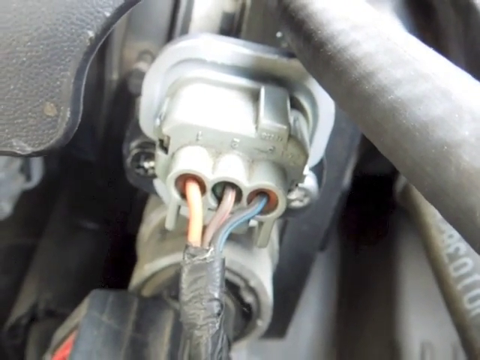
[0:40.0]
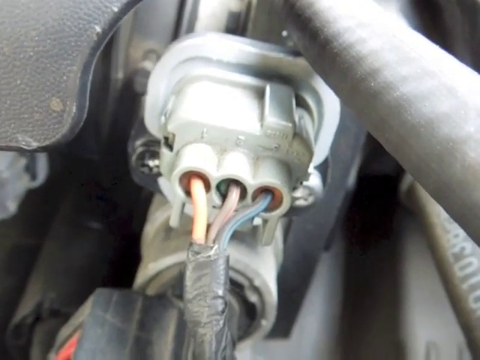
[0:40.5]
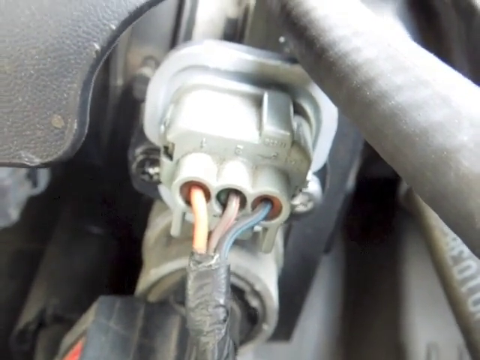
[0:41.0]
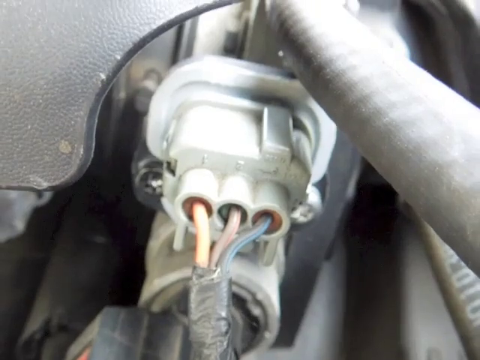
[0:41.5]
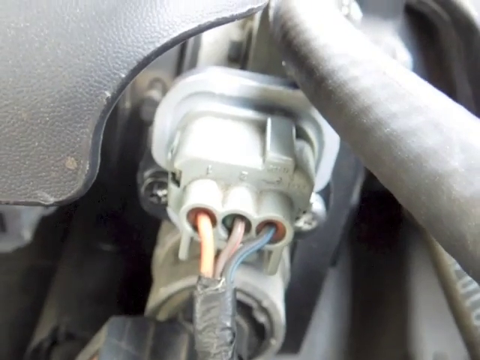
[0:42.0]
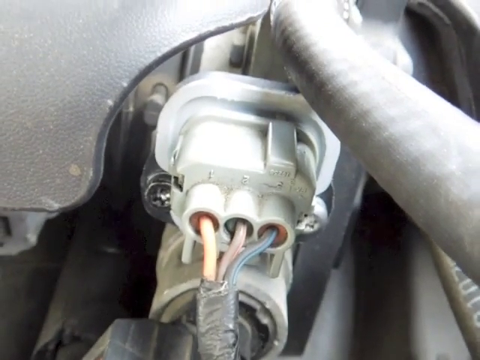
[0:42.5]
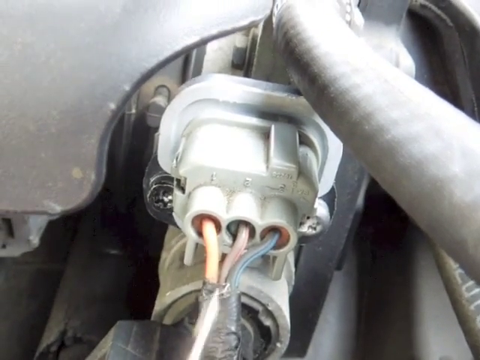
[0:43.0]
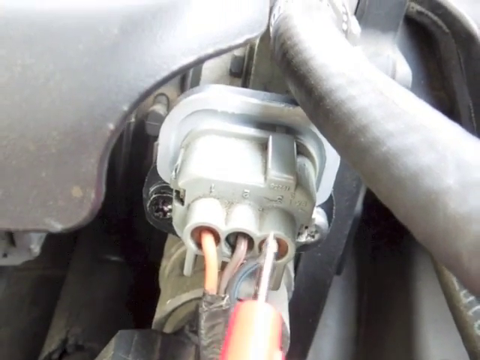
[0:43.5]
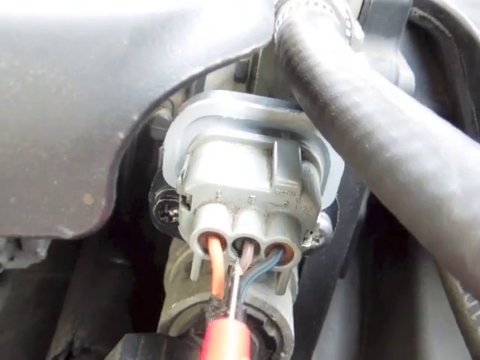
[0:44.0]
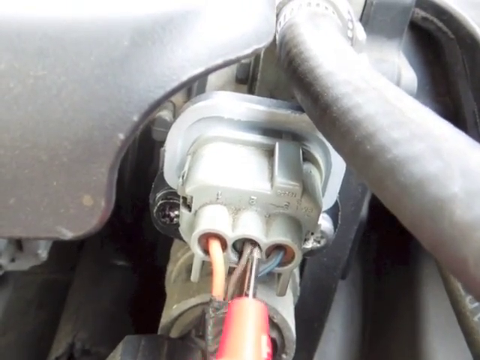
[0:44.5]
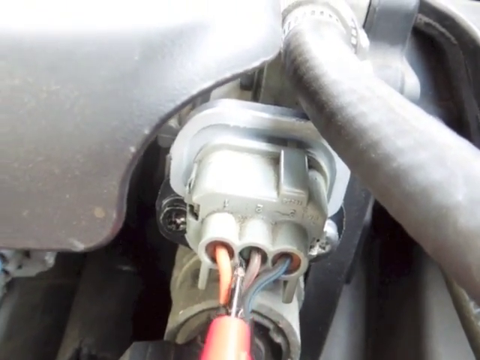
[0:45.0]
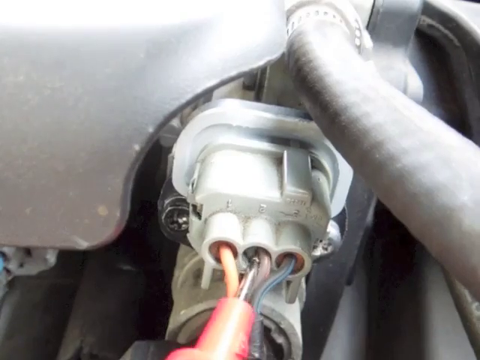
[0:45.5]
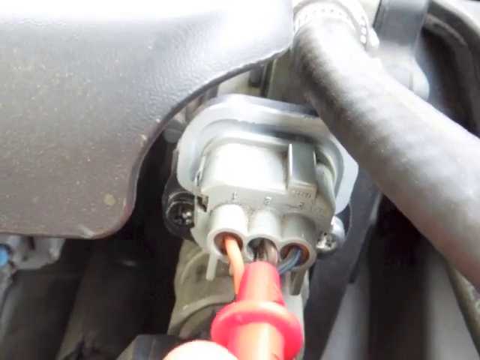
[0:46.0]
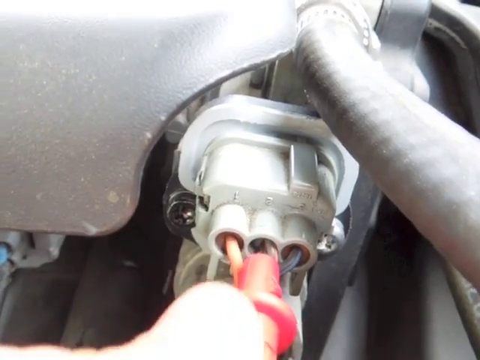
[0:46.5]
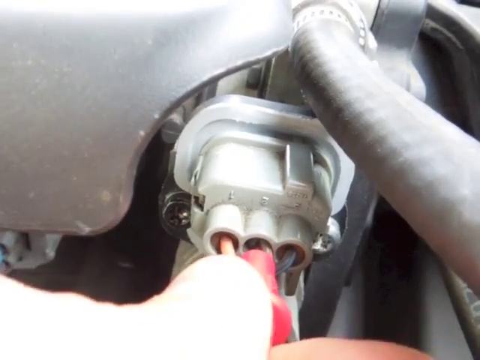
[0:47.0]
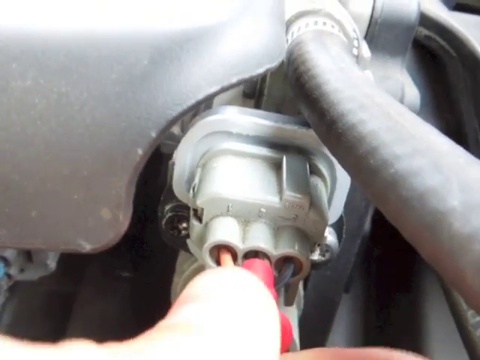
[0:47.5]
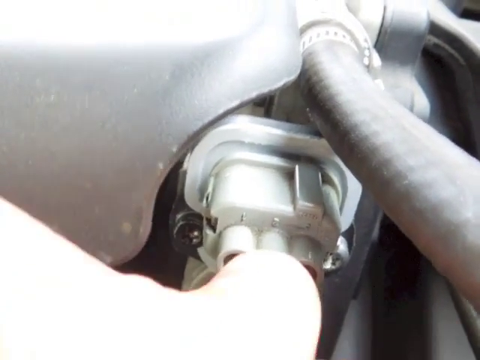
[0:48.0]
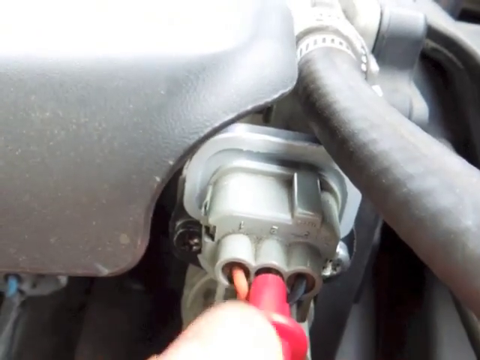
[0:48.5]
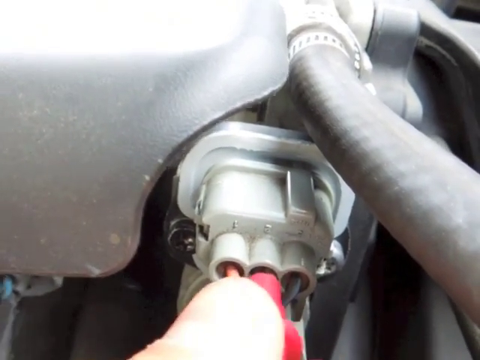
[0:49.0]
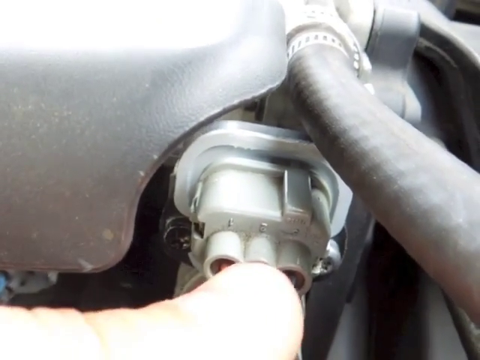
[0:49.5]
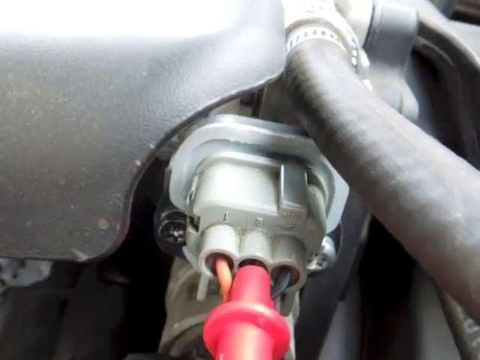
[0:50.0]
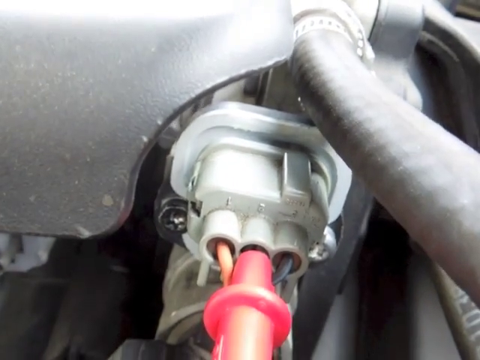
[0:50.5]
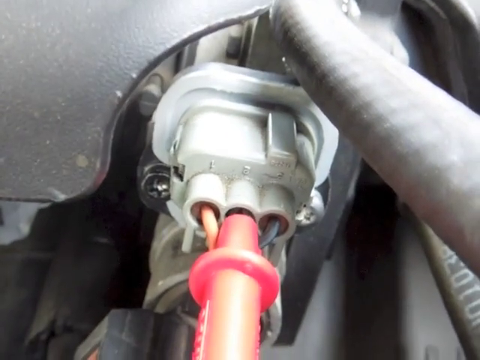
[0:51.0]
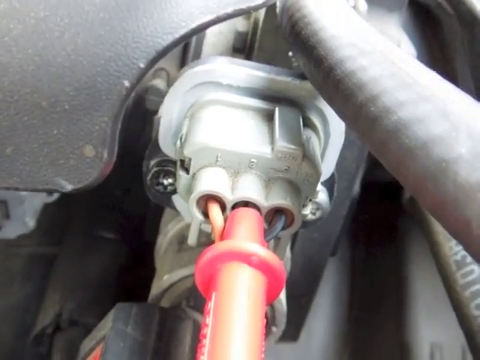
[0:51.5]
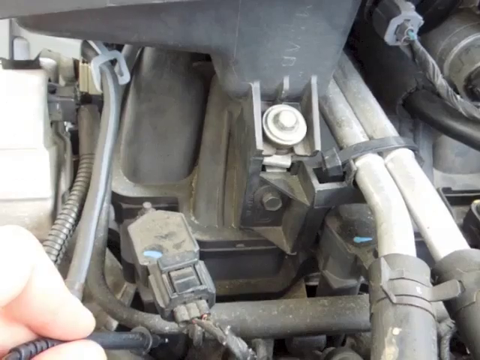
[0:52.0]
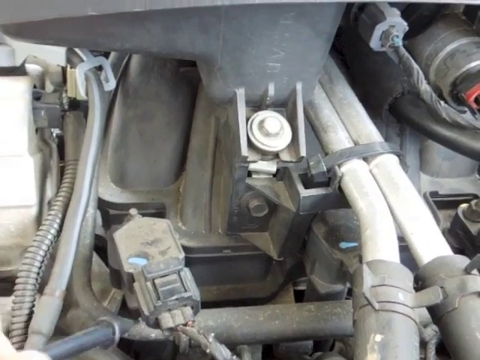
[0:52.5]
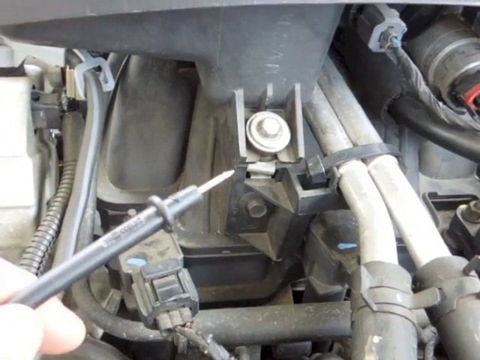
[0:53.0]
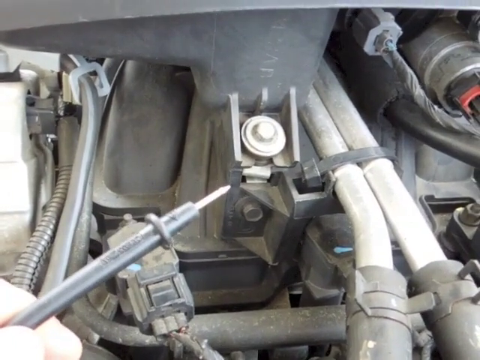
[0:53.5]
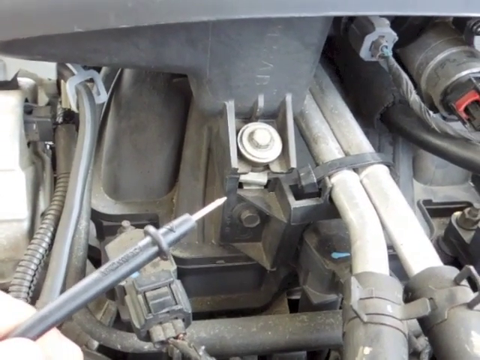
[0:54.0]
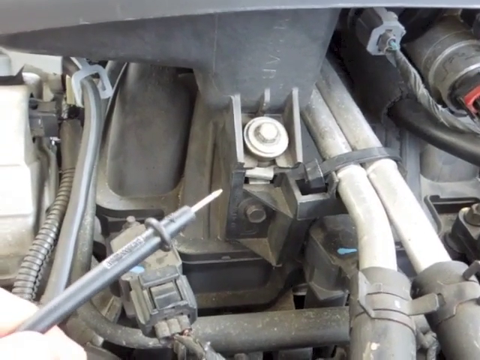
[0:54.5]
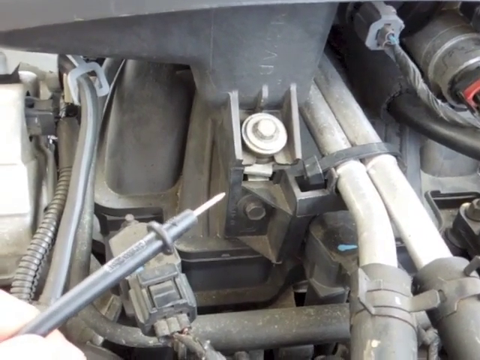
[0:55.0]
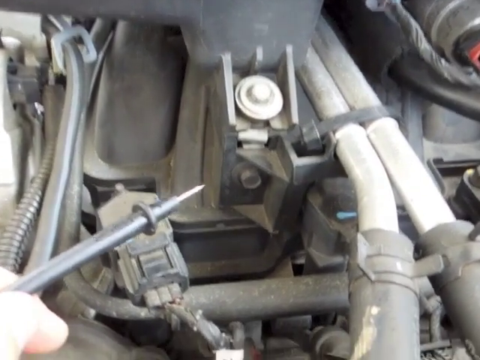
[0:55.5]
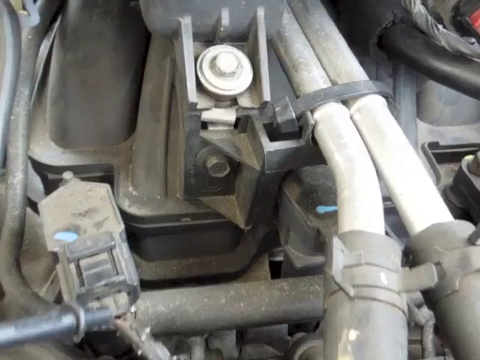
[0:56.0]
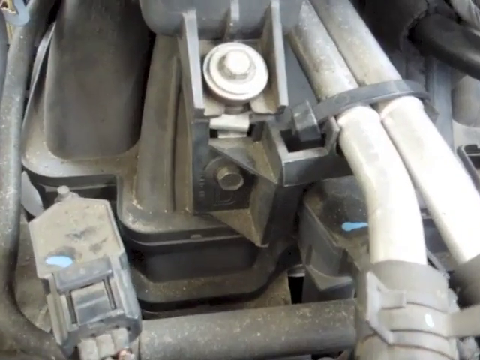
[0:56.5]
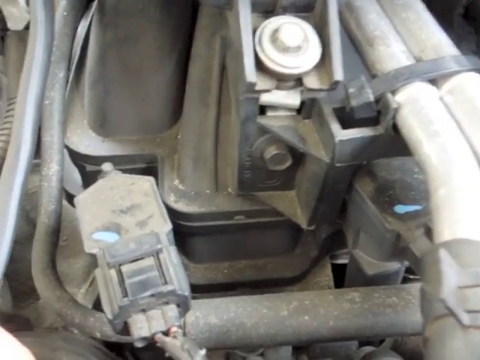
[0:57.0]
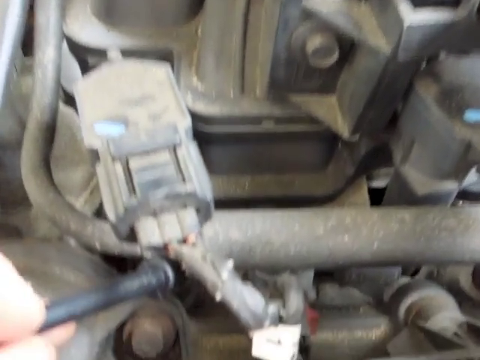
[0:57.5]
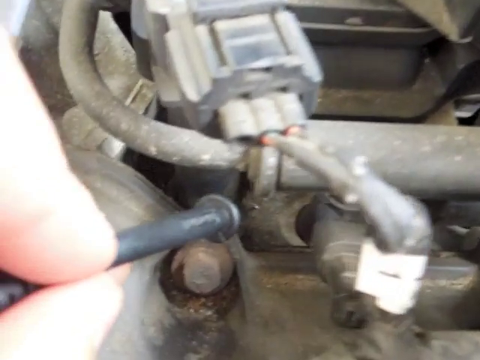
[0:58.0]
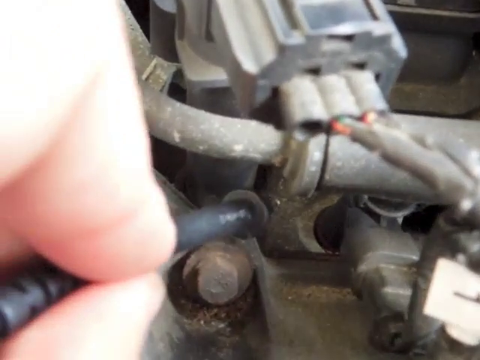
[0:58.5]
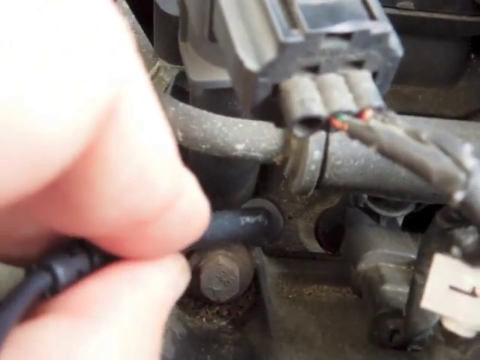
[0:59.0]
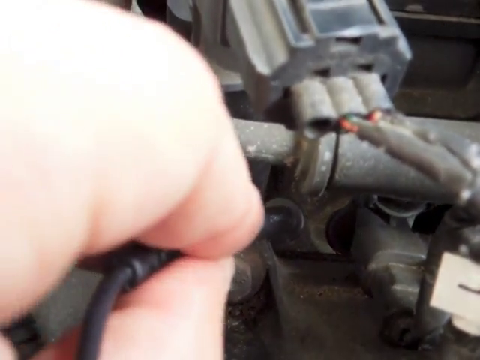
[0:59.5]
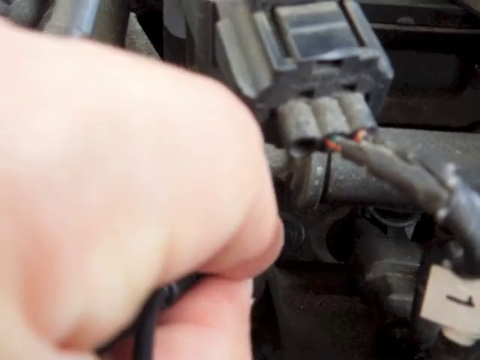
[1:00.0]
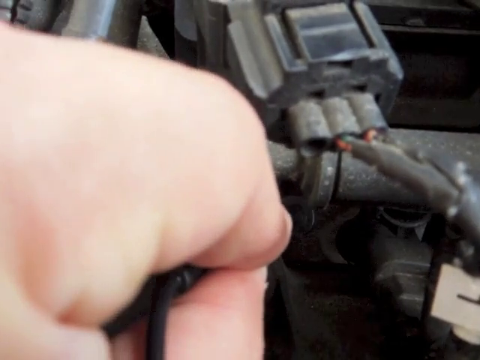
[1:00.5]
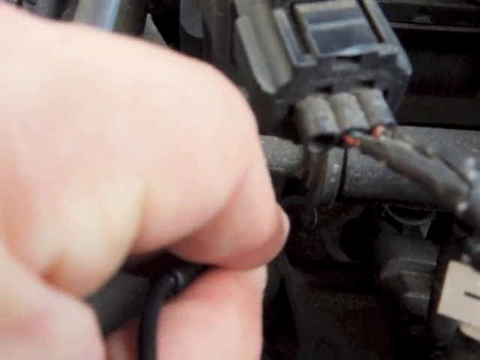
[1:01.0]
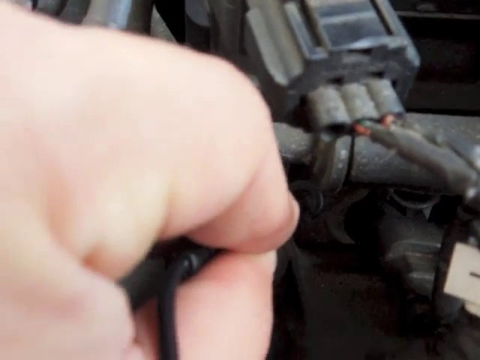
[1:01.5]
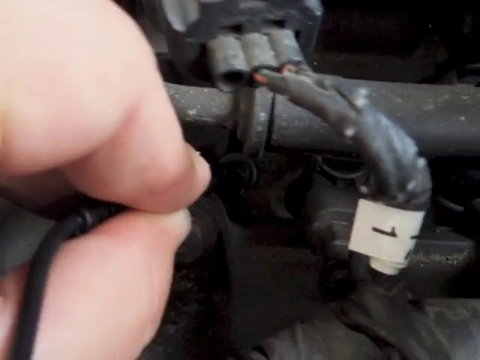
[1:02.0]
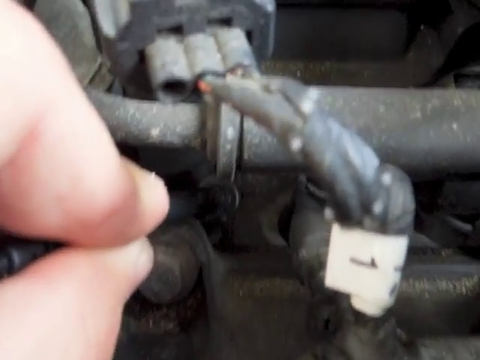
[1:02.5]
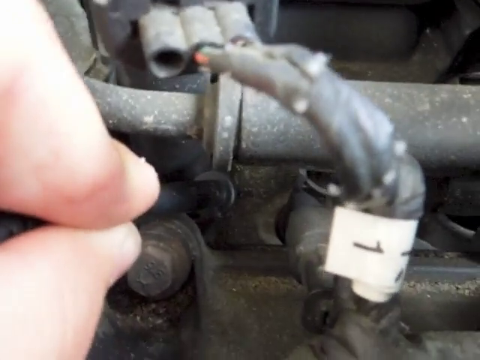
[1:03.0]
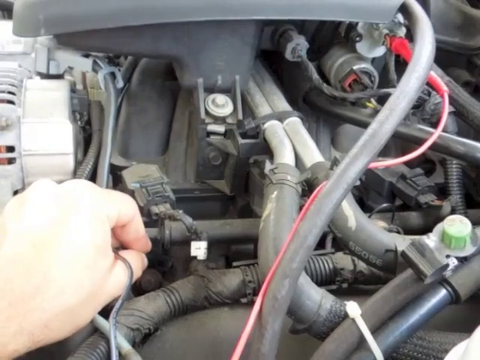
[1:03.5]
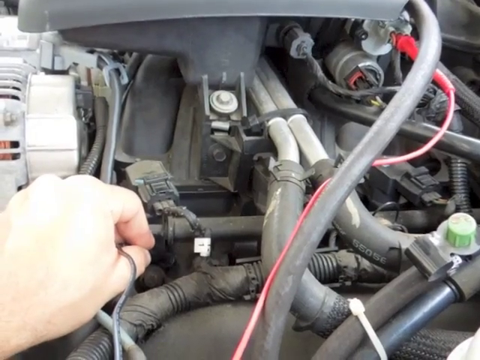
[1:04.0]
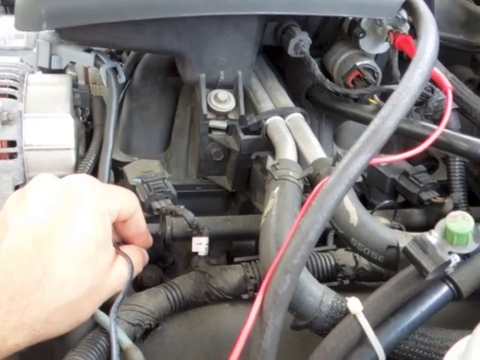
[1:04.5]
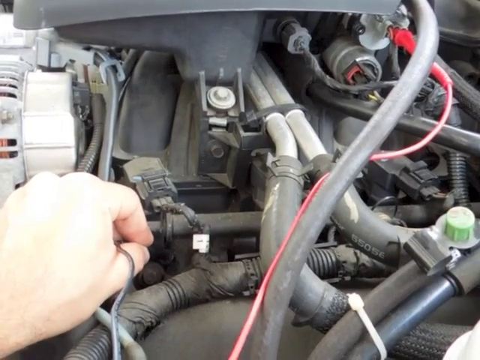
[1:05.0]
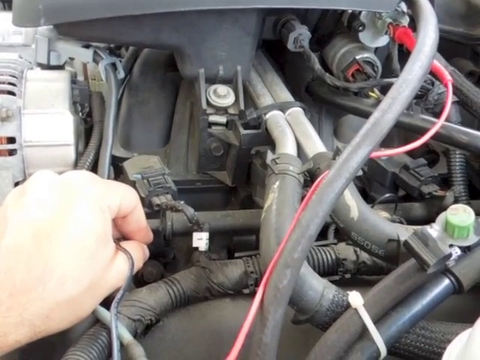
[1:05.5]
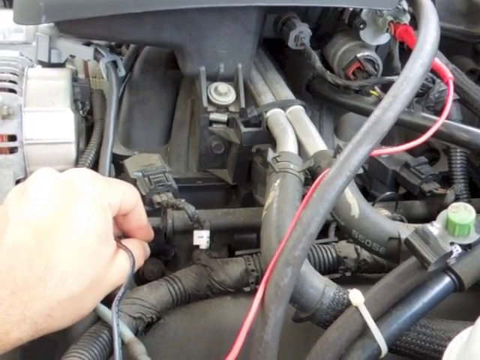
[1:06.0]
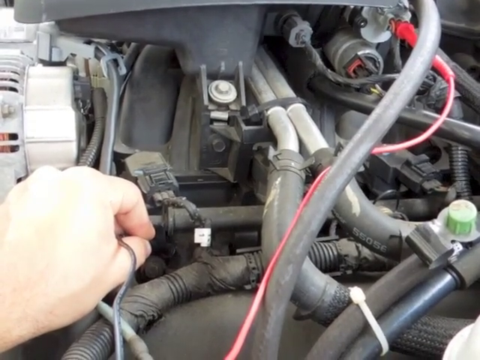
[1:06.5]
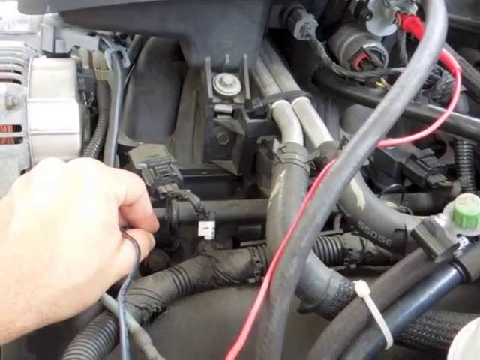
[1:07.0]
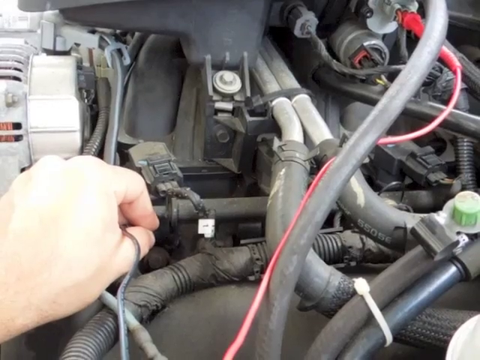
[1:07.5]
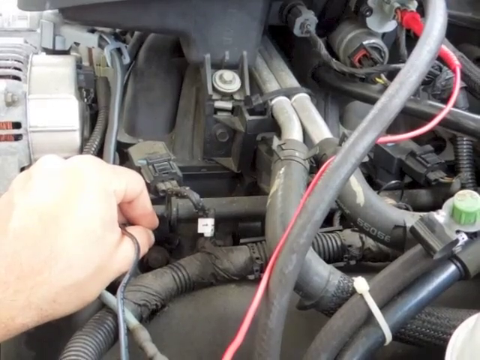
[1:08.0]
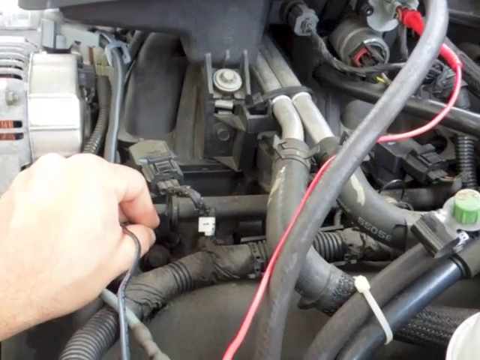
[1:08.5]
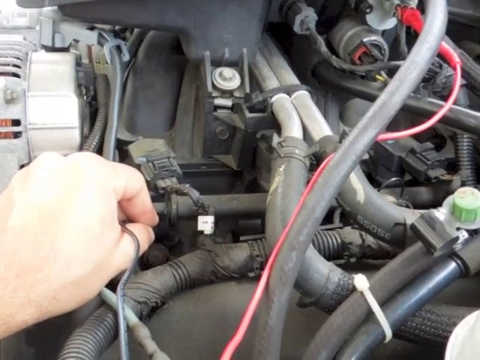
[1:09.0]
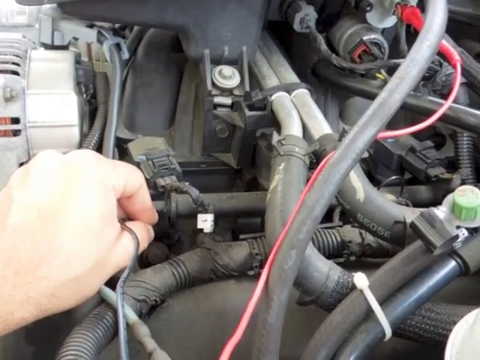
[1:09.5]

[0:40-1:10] At the electrical connector behind the air cleaner cover, the mechanic inserts a metal probe of a multimeter into the center wire connection point of the connector, testing the electrical circuit. He touches the multimeter's black ground probe to a metal strut in the lower engine area, in front of the air cleaner area, as a ground connection. The multimeter is set at 20 under DCV.